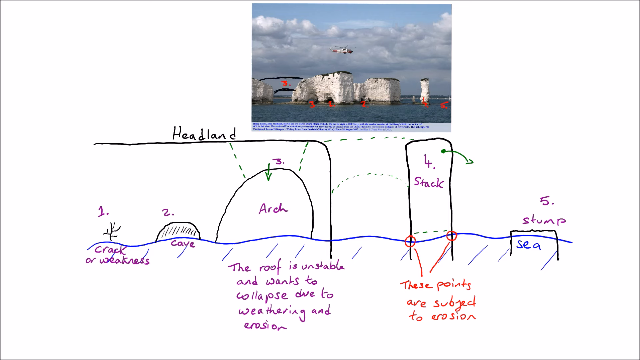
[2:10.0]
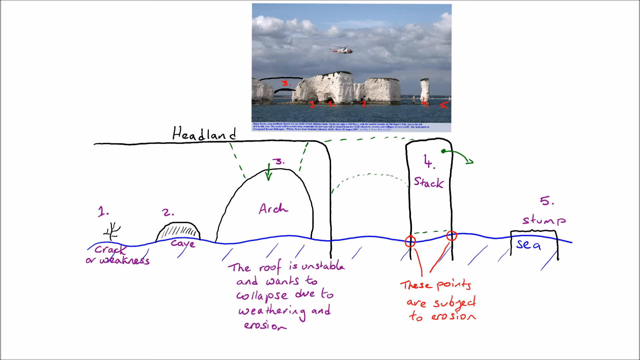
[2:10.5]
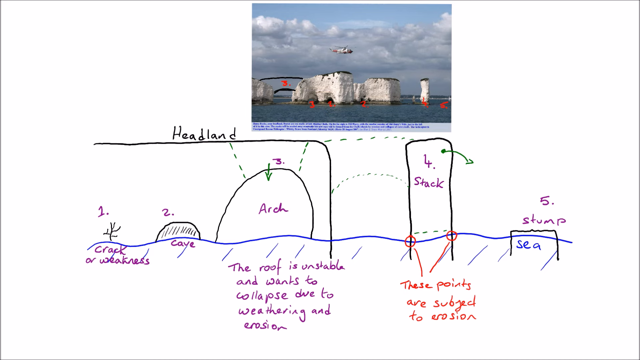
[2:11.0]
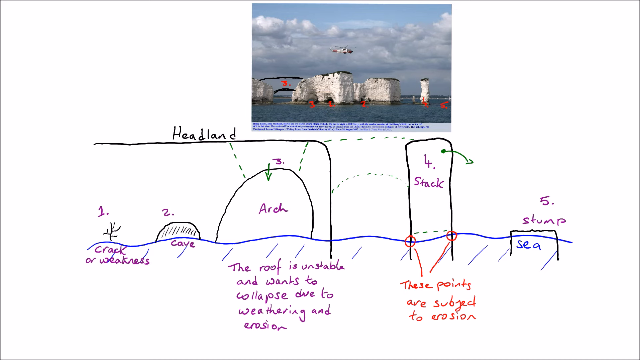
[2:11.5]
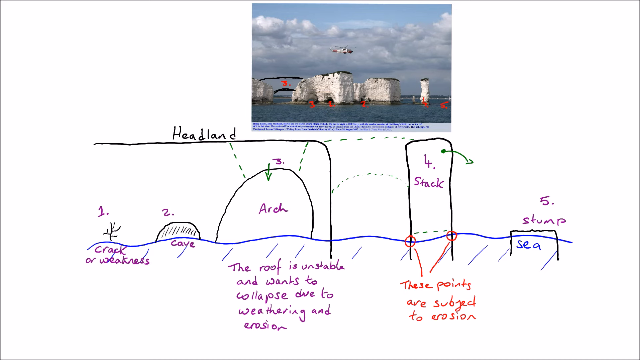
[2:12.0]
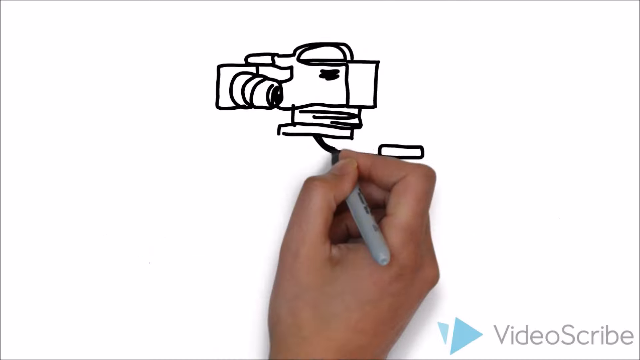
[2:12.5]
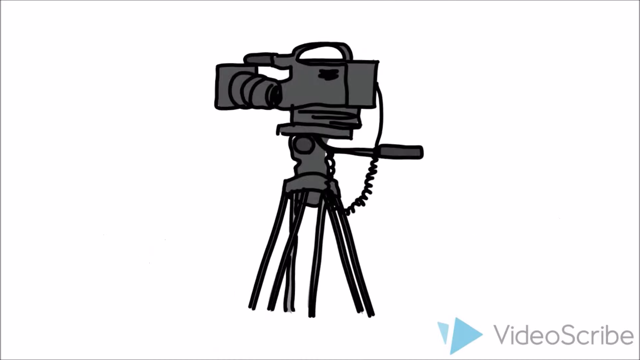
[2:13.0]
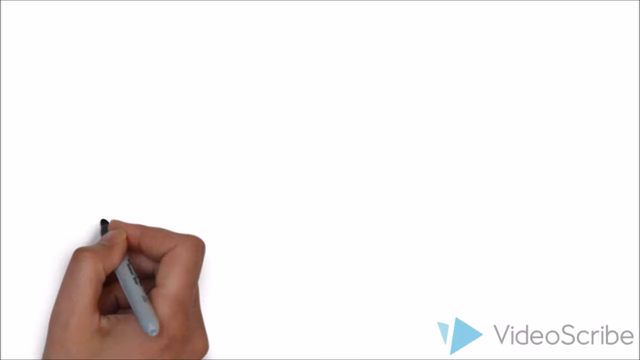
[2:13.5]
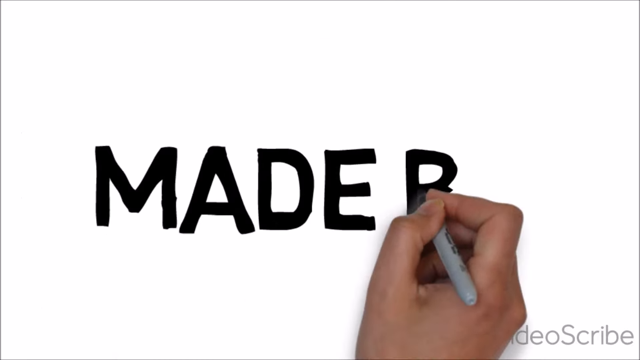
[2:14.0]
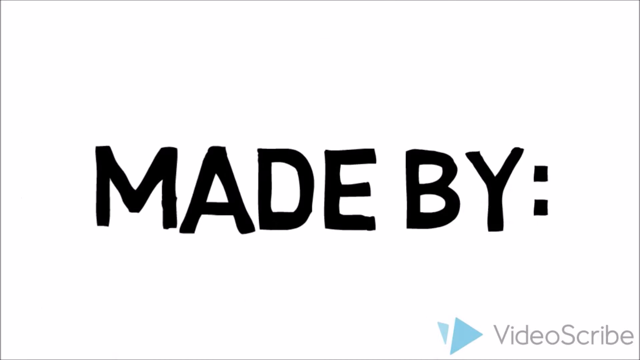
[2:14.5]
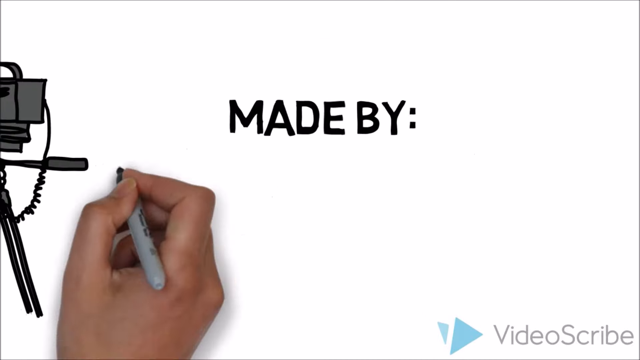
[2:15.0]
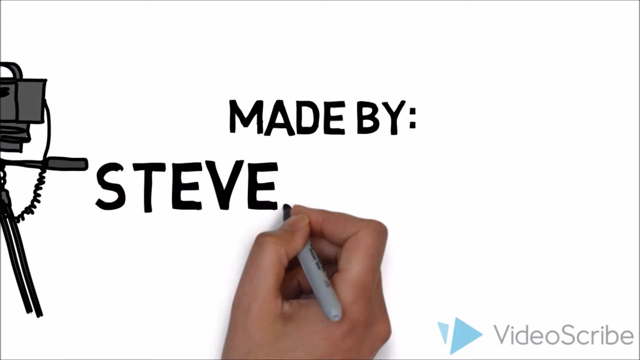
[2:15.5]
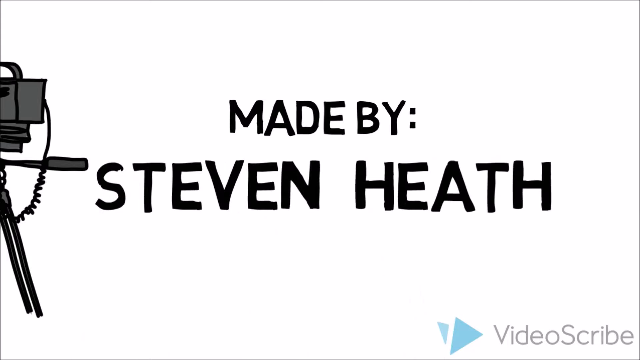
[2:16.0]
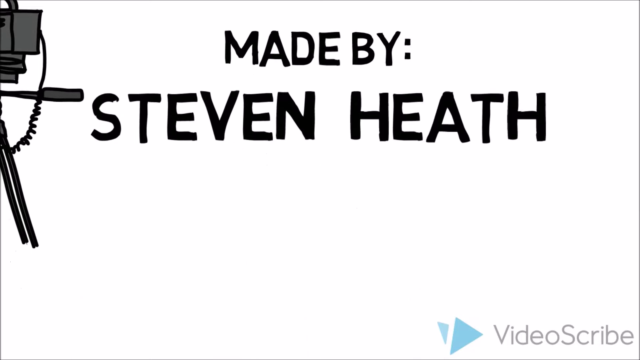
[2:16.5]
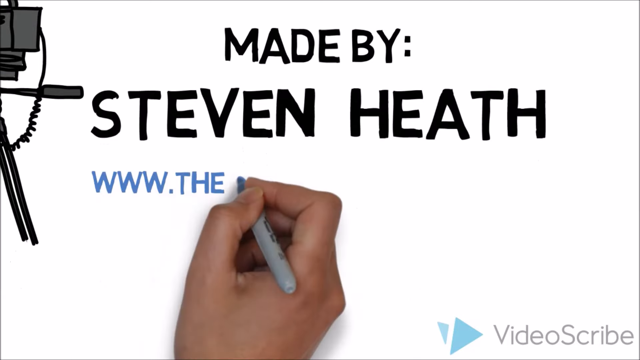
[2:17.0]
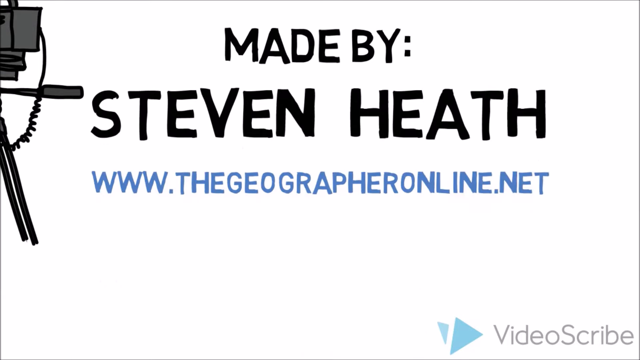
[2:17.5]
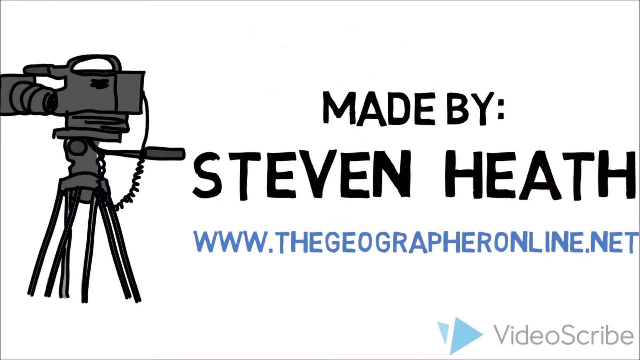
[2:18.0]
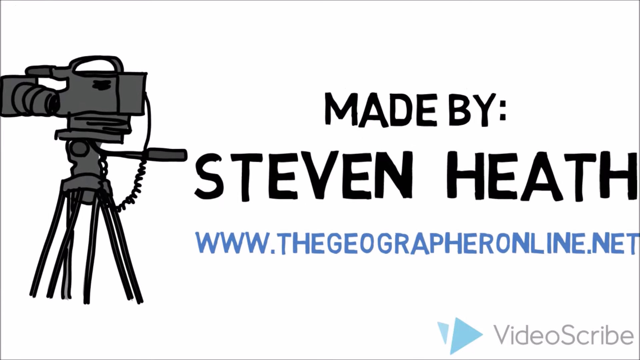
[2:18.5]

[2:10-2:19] The completed drawing shows the headland with the crack or weakness, the cave as number 2, the arc as number 3 with text saying its roof is unstable and wants to collapse due to weathering and erosion, the stack as number 4 separated from the headland, two marked points subject to erosion at sea level, and the stump. A well-detailed diagram of the headland and the stack is also on screen, with some inscriptions under the picture that are not clearly legible.